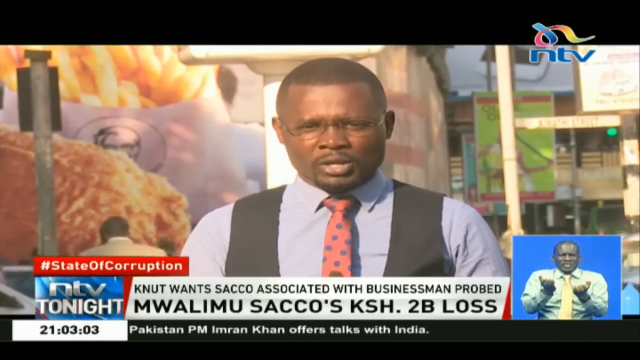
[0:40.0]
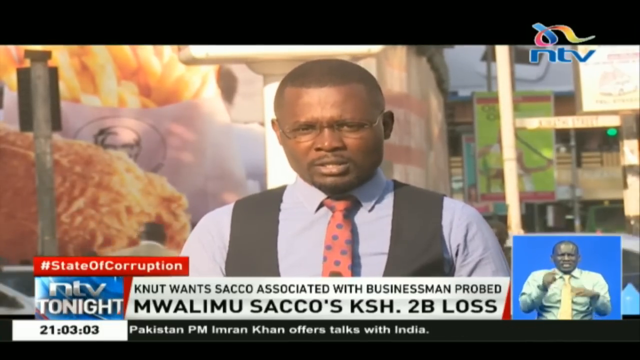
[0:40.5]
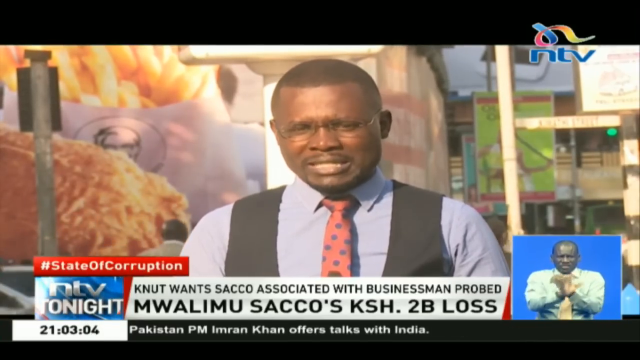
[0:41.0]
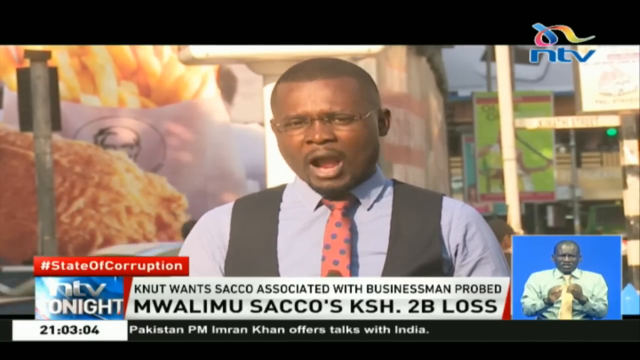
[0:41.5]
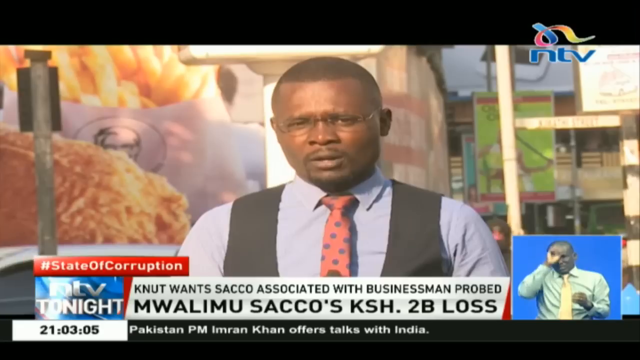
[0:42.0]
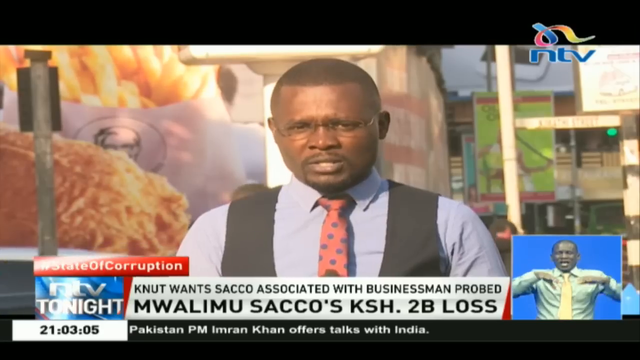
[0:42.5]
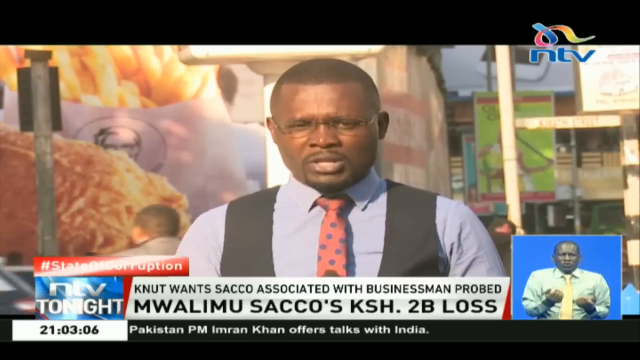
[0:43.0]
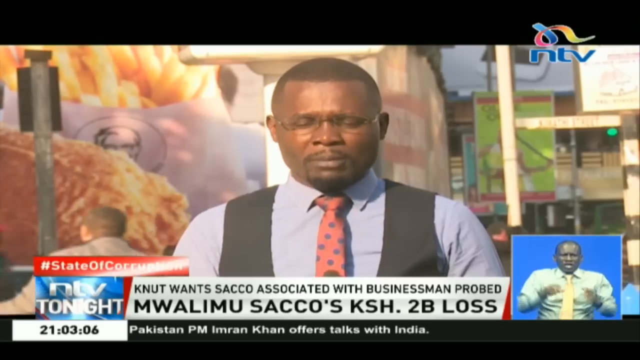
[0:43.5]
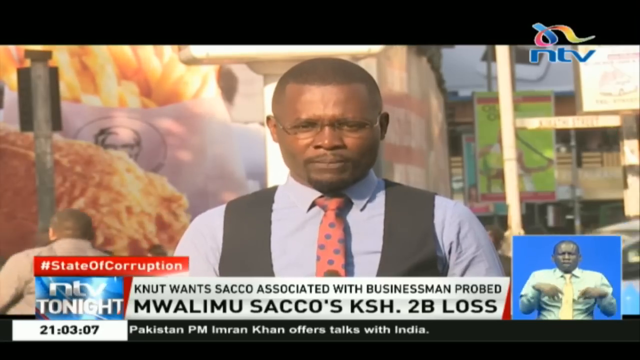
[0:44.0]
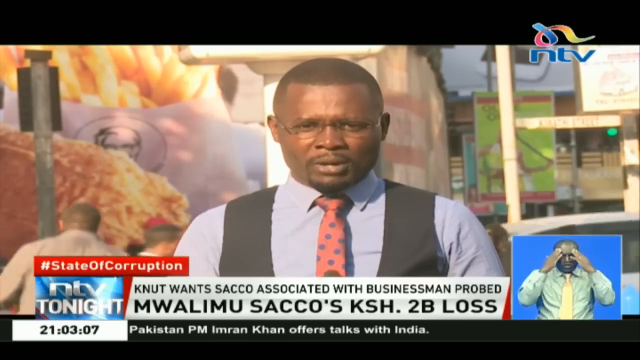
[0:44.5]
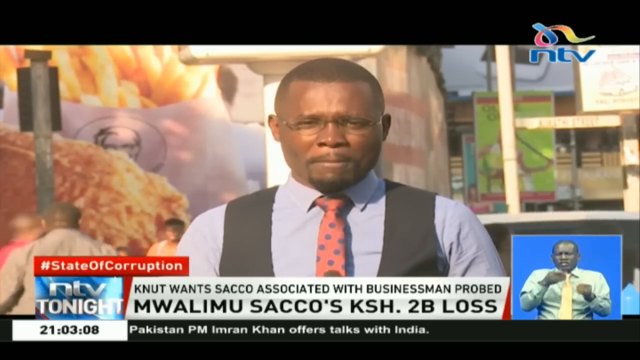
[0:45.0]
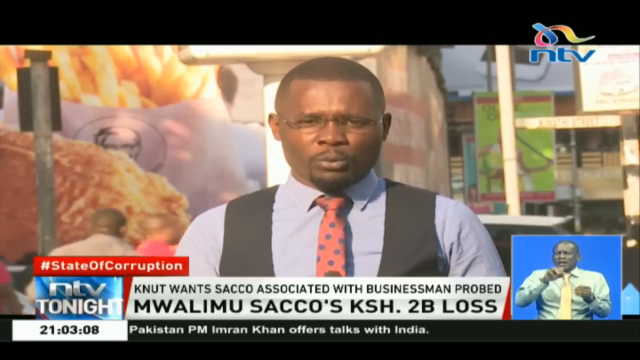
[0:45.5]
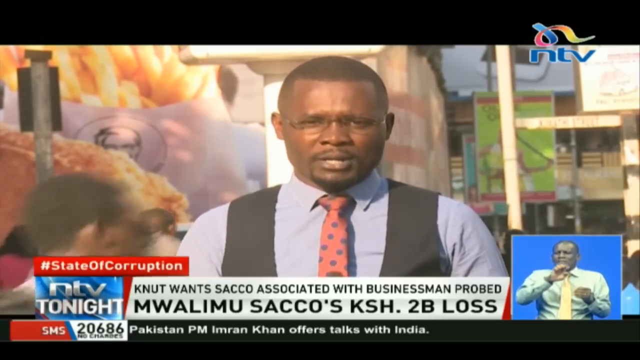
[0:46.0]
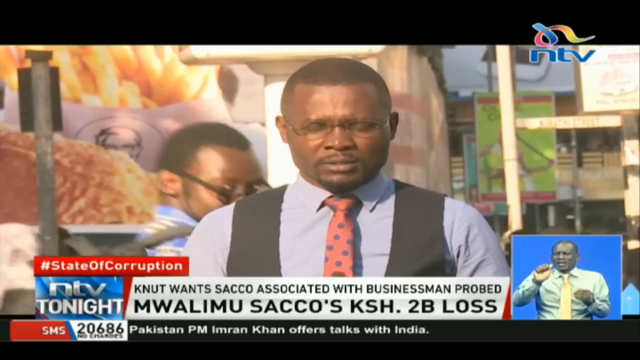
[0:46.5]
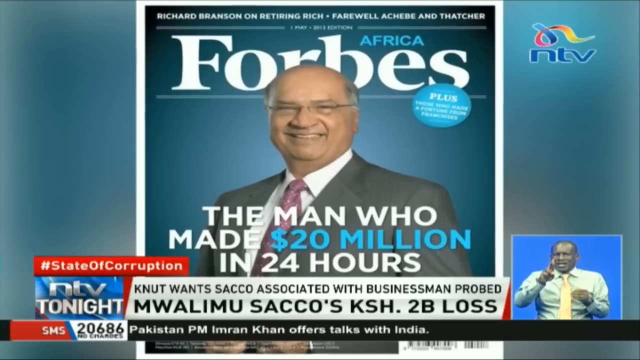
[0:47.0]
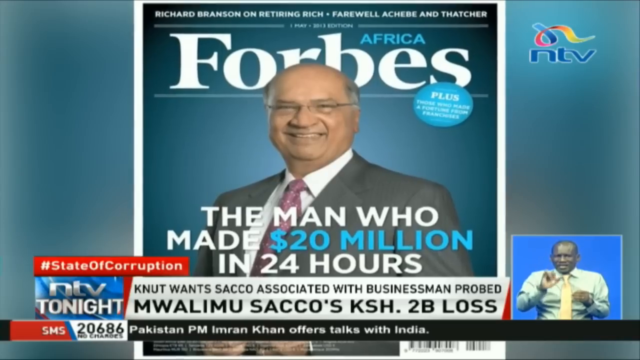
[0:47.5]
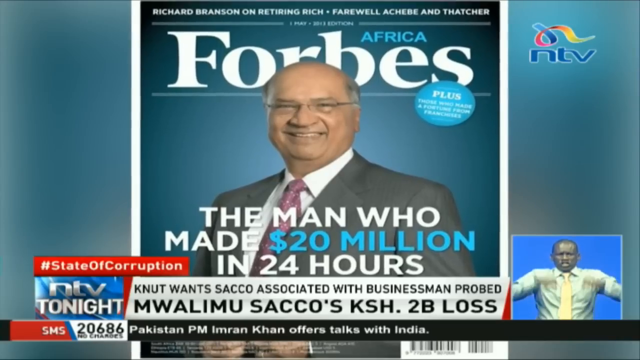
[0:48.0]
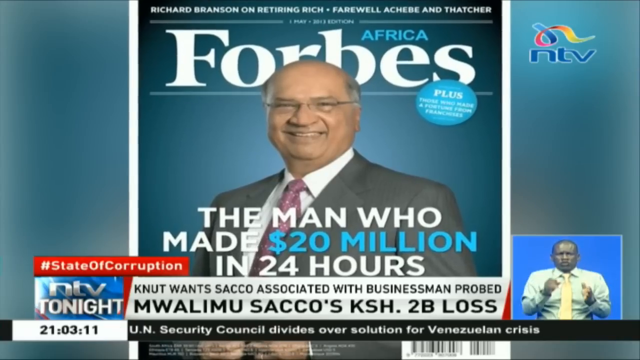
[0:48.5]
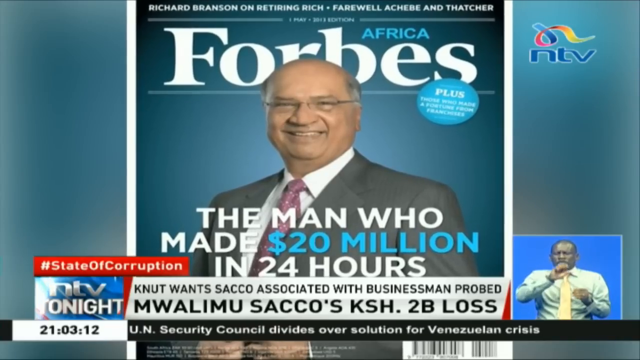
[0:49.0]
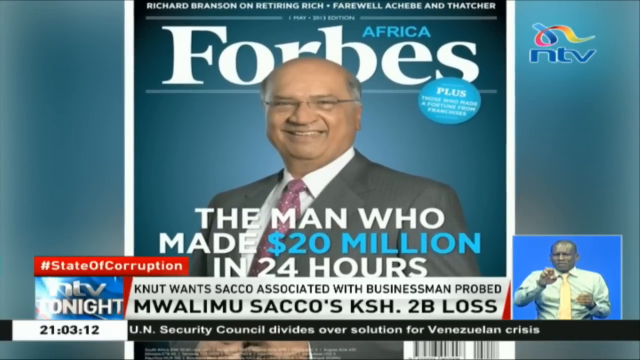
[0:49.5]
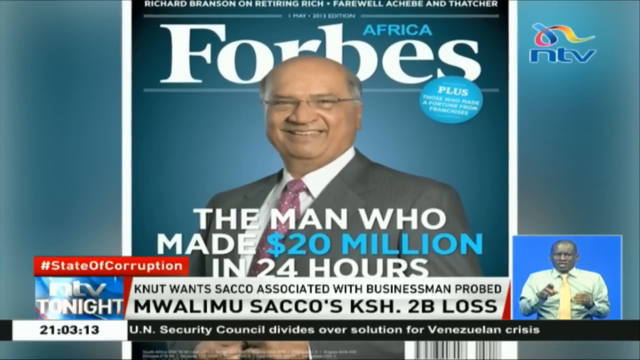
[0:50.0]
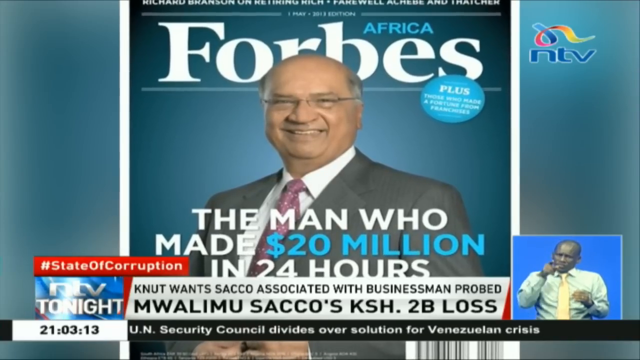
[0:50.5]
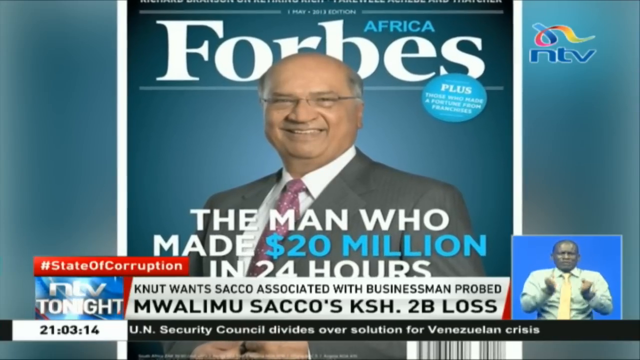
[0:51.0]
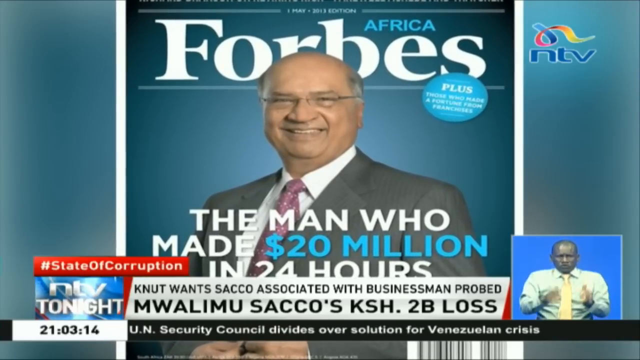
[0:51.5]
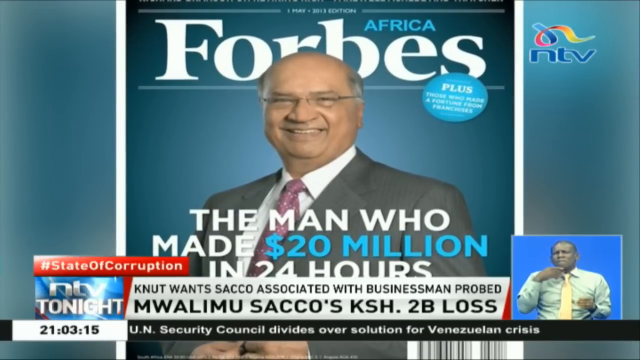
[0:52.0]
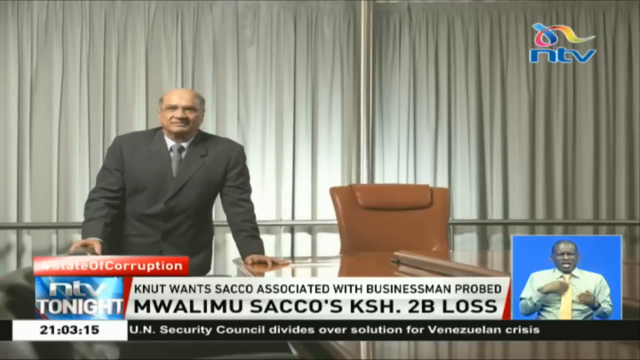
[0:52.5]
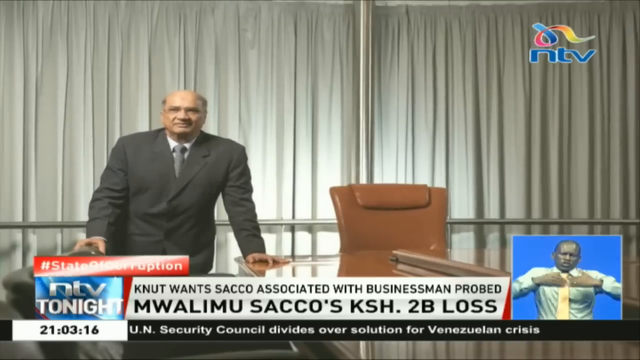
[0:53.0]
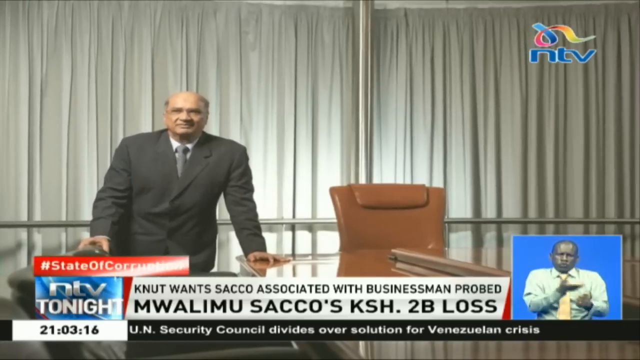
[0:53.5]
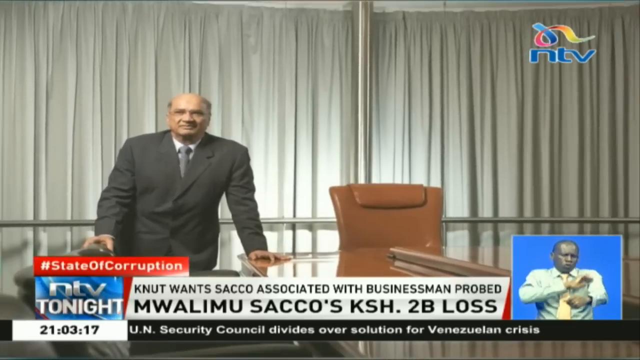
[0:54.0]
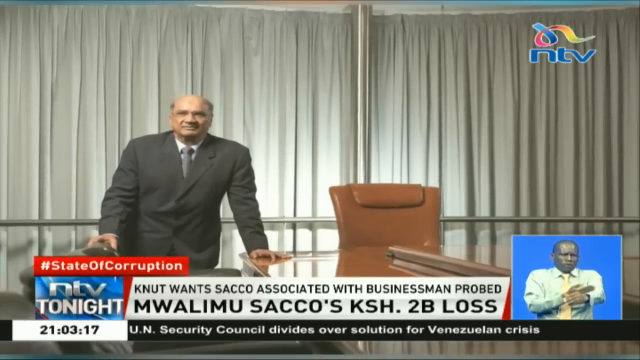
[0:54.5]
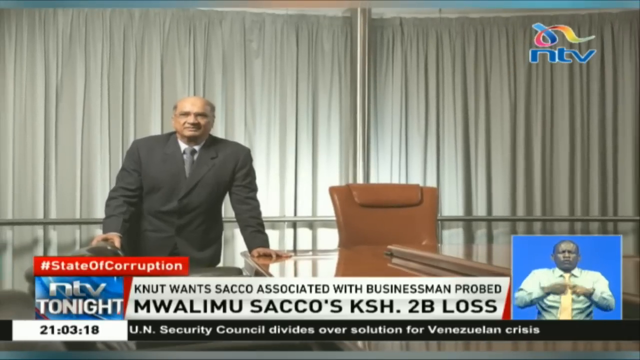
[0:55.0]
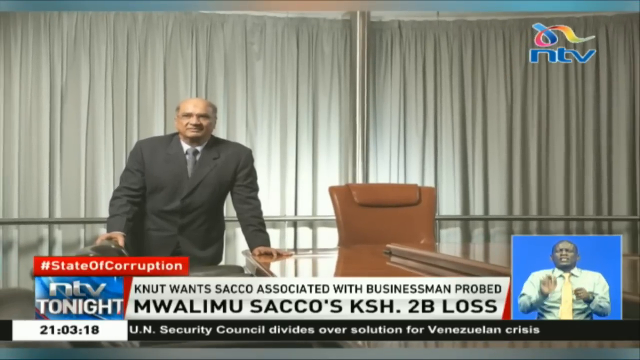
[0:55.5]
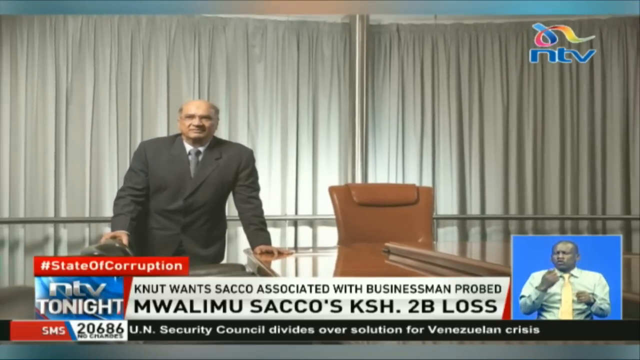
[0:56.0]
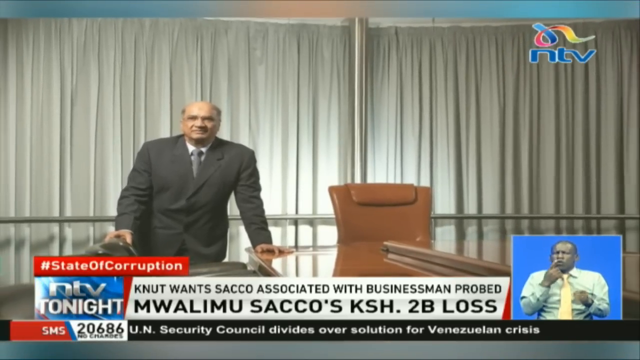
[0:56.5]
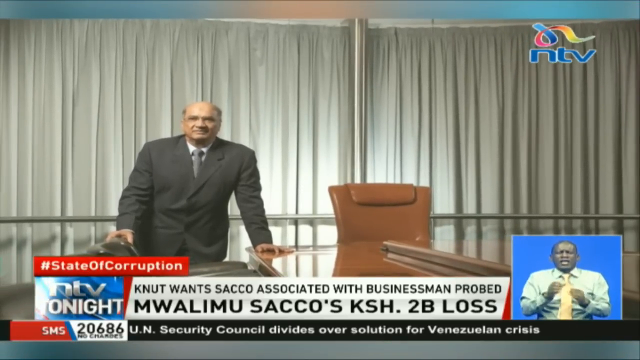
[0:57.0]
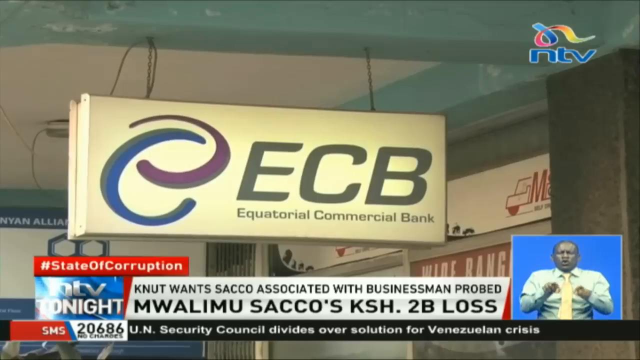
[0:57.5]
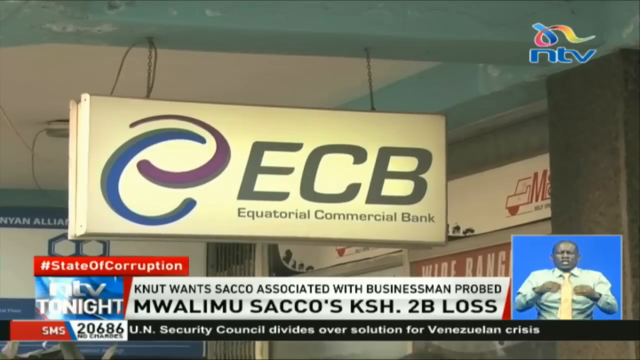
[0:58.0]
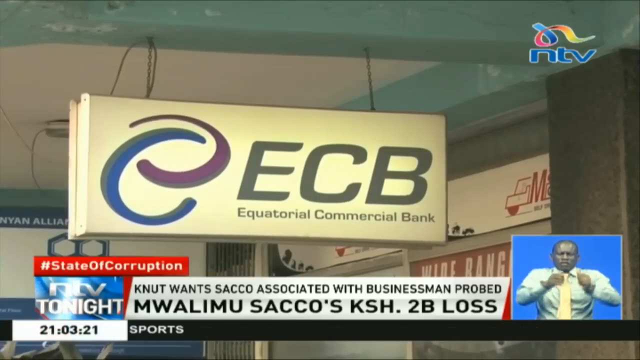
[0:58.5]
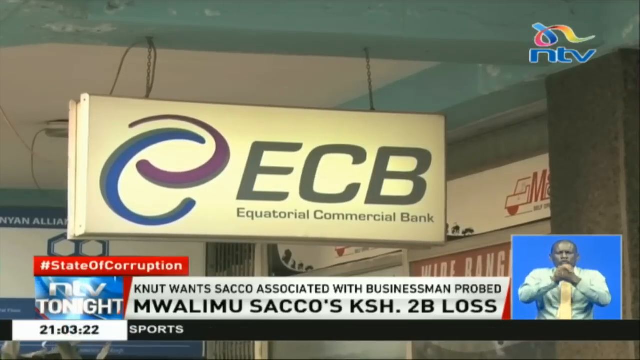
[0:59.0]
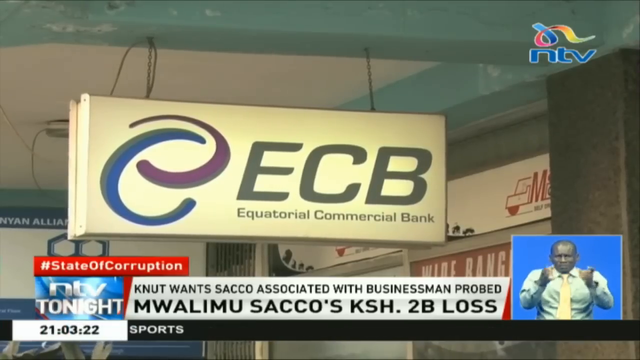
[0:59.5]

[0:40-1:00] The NTV broadcast continues, with the blue NTV emblem in the upper right corner and a curling rainbow-coloured ribbon above it. A man with dark hair and dark eyes, African, is on screen wearing a vest, a blue shirt and a blue-and-orange polka-dotted tie. In the lower left corner is "state of corruption" and "NTV tonight". To the right of that is "KNUT wants SACO associated with business probed", and beneath it "WMALIMU SACCO'S KSH two billion loss". To the right of that, a small screen shows a person signing for the hearing impaired: an African man in his 50s wearing a white shirt and yellow tie against a blue background.